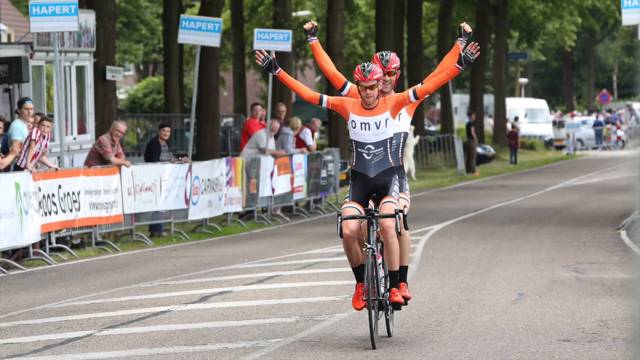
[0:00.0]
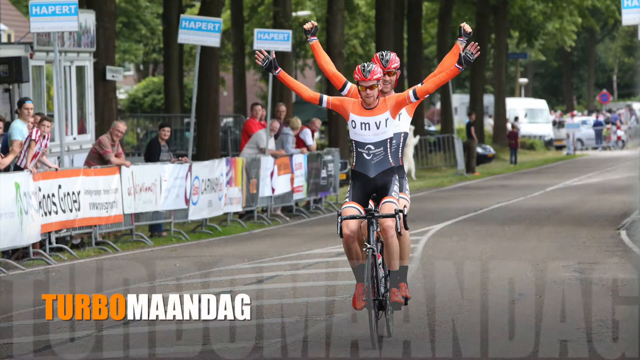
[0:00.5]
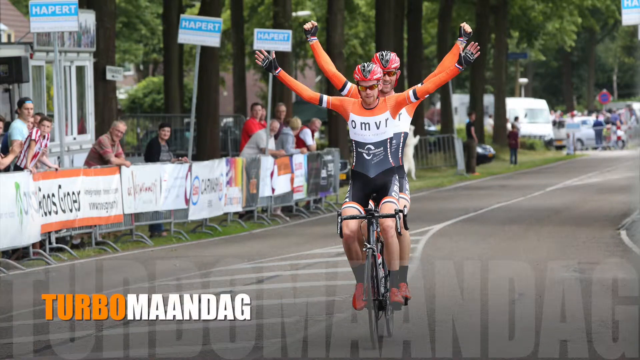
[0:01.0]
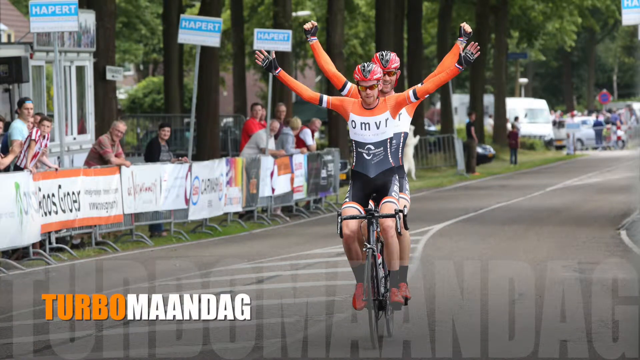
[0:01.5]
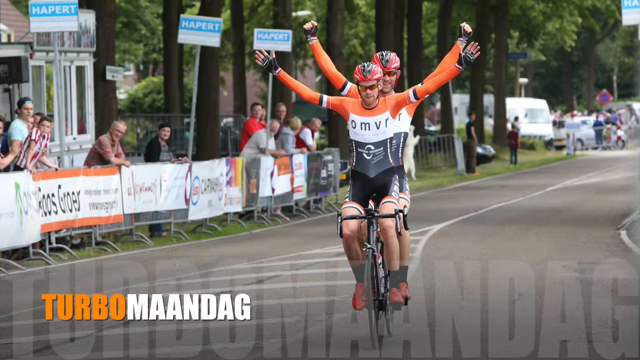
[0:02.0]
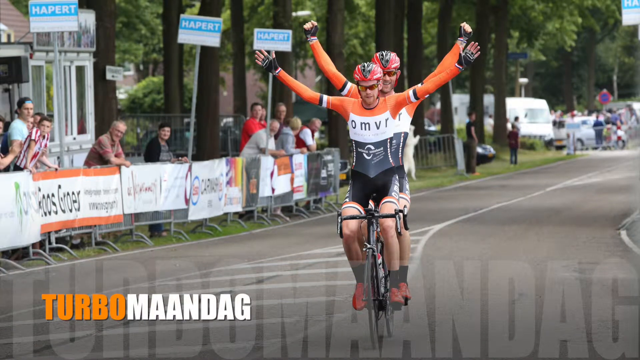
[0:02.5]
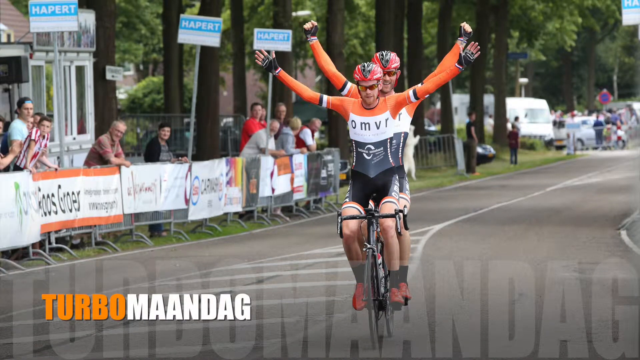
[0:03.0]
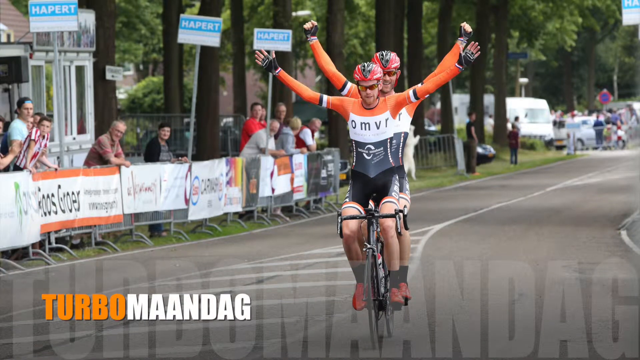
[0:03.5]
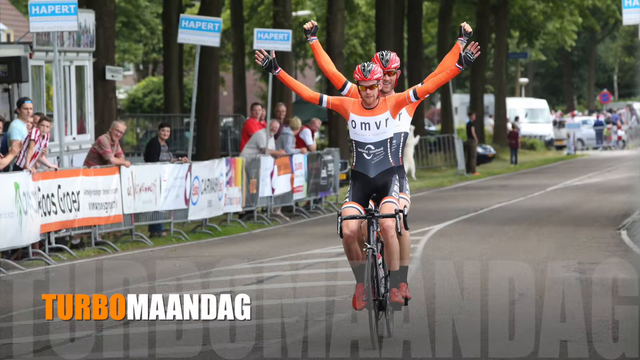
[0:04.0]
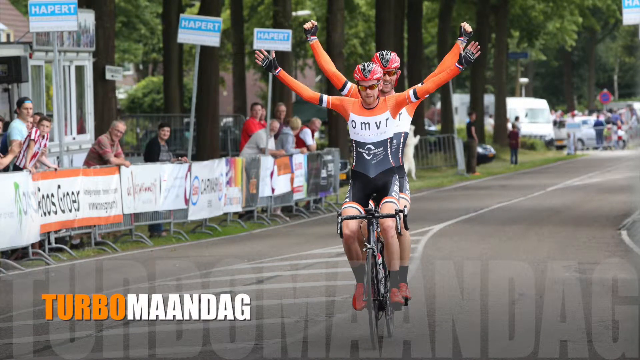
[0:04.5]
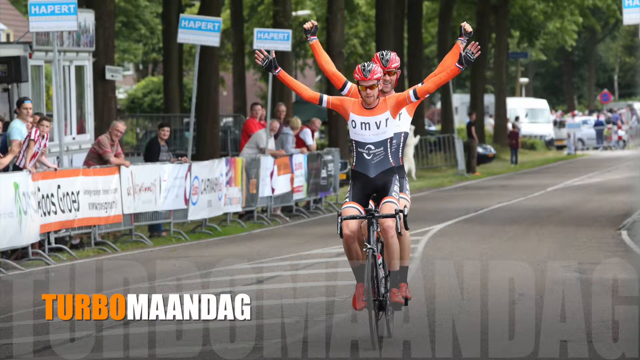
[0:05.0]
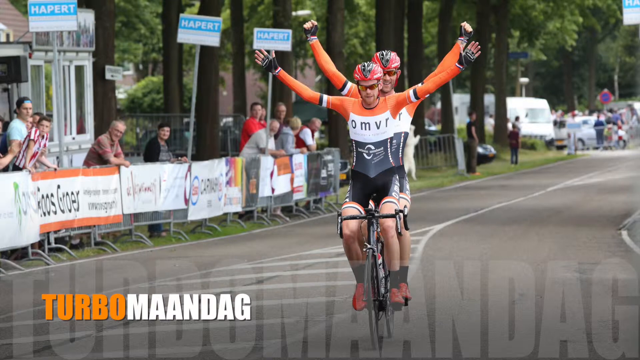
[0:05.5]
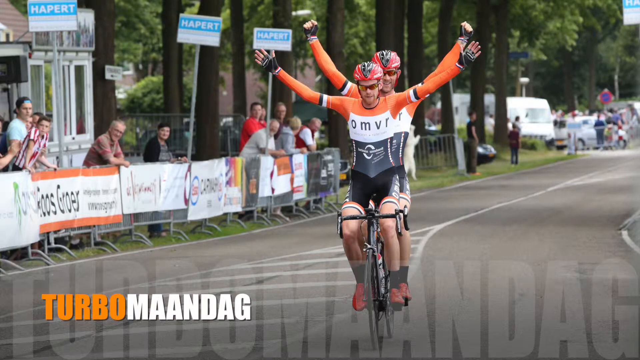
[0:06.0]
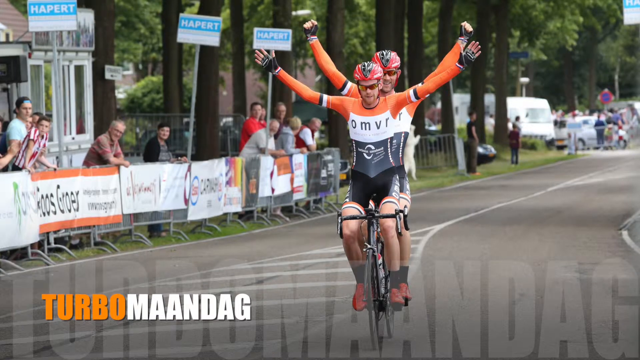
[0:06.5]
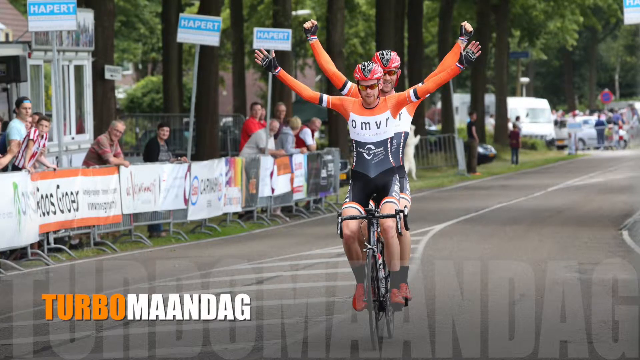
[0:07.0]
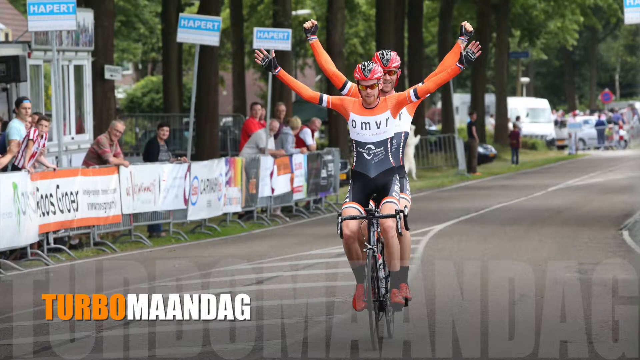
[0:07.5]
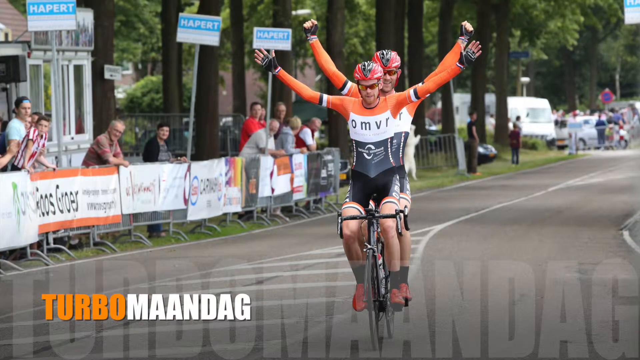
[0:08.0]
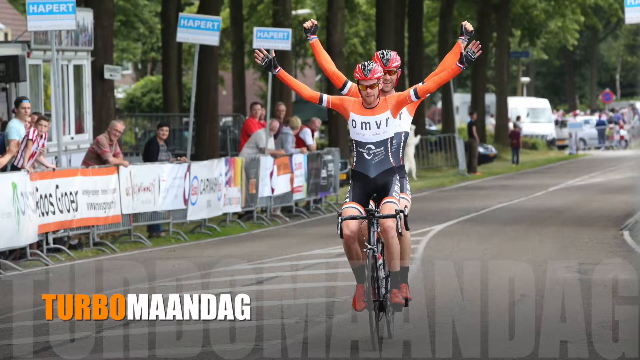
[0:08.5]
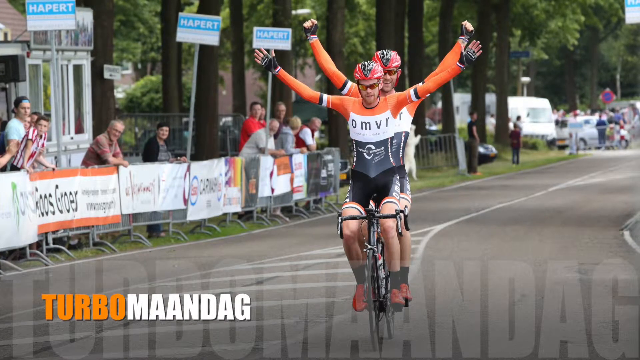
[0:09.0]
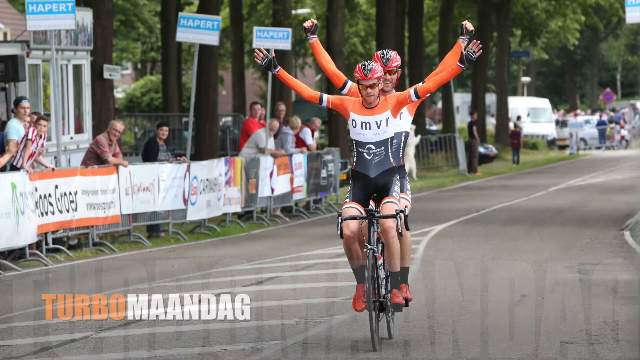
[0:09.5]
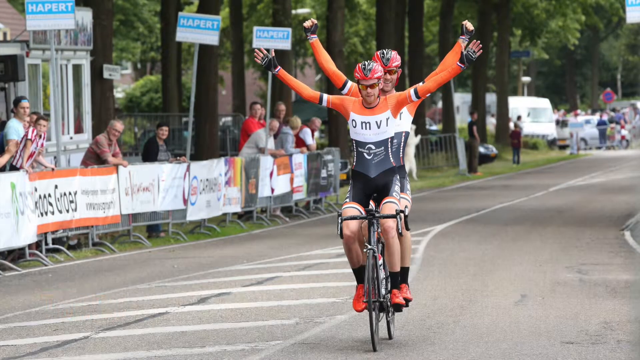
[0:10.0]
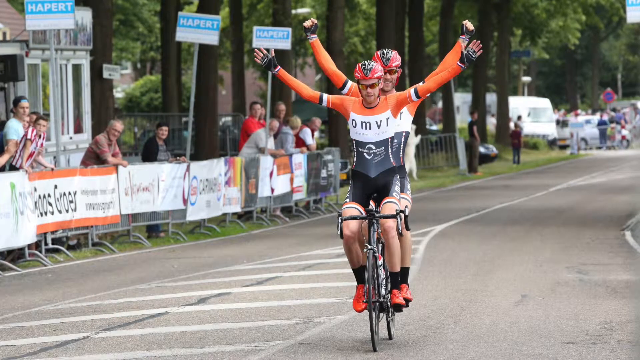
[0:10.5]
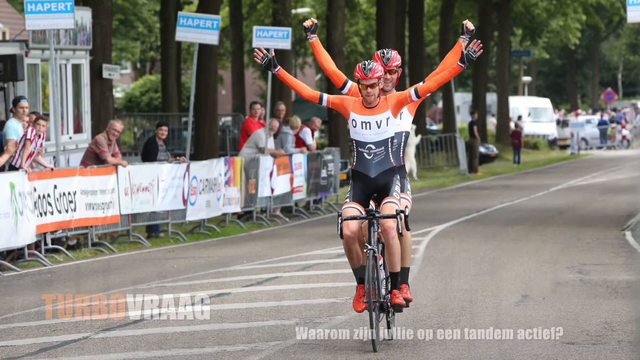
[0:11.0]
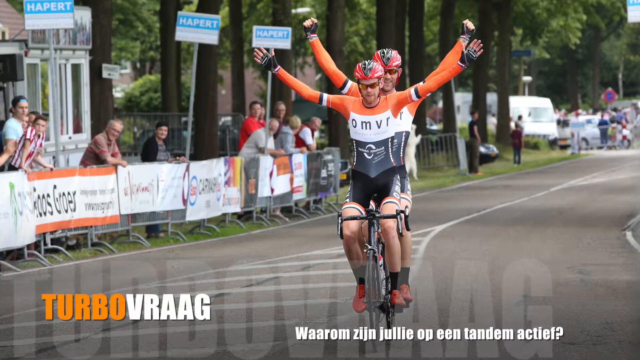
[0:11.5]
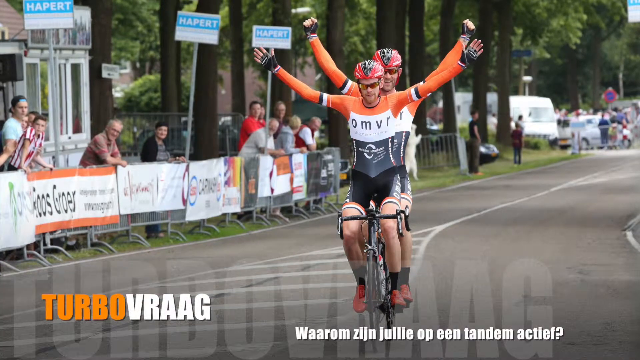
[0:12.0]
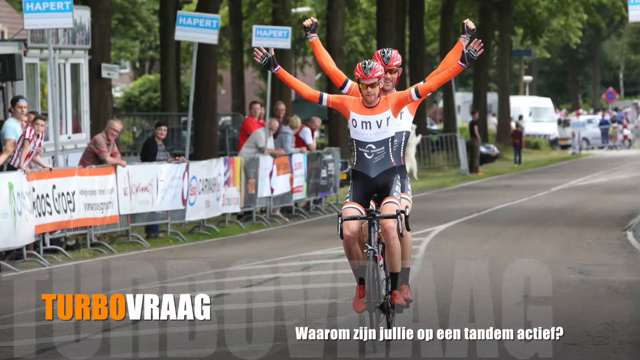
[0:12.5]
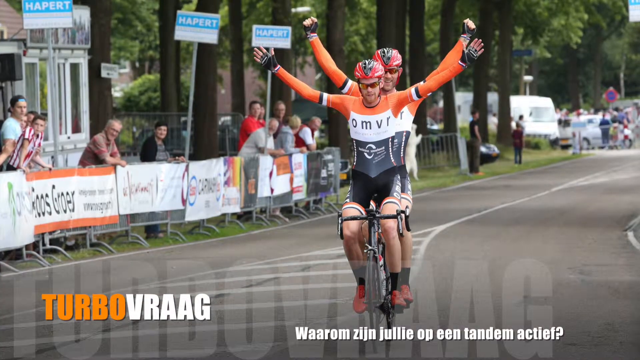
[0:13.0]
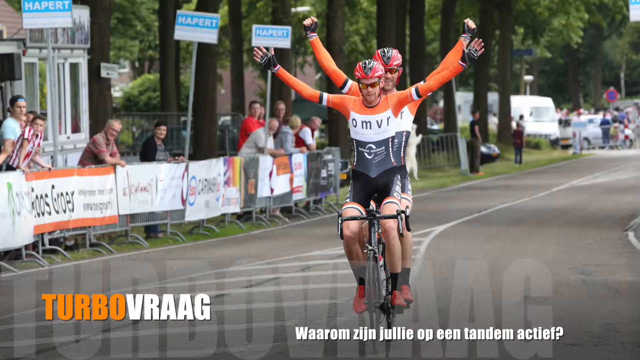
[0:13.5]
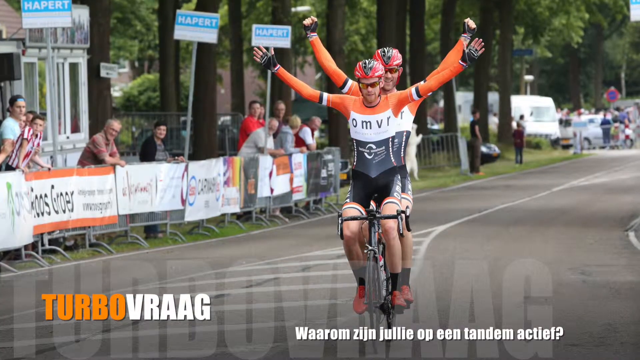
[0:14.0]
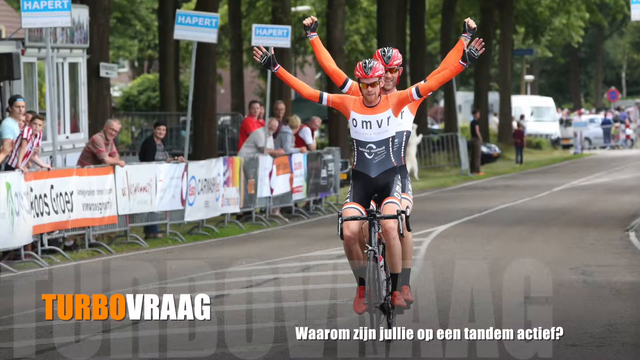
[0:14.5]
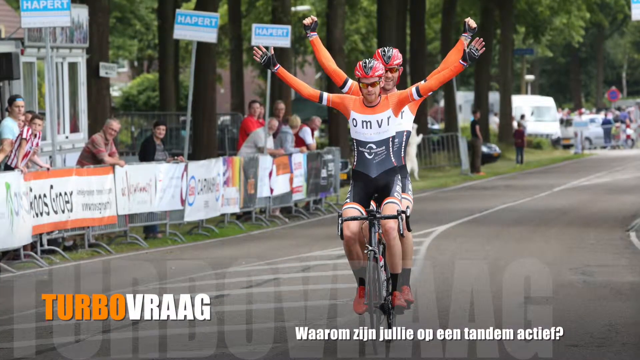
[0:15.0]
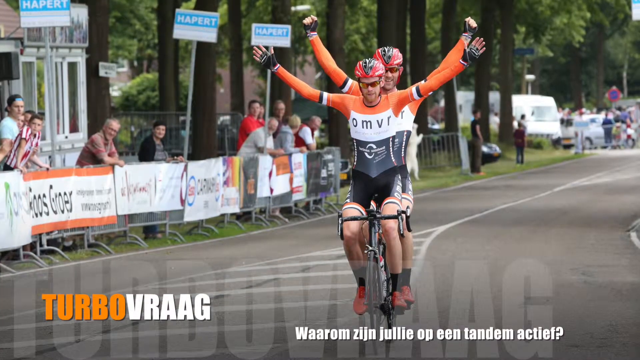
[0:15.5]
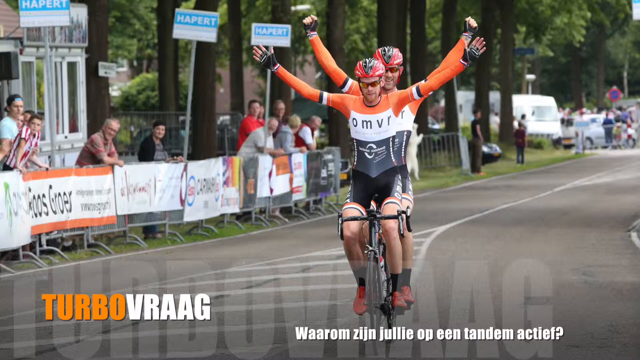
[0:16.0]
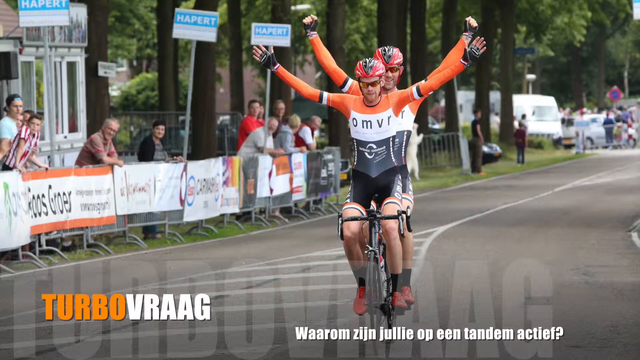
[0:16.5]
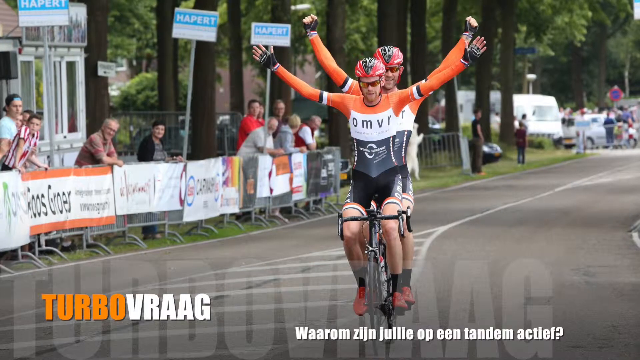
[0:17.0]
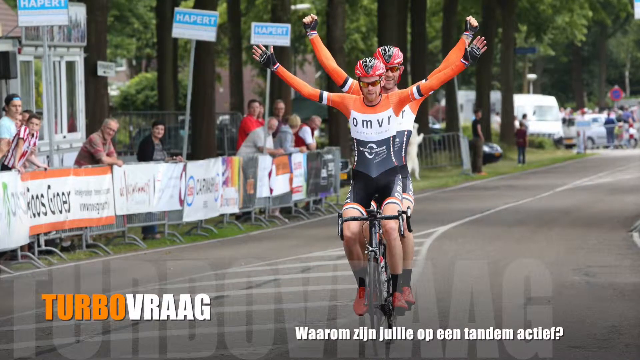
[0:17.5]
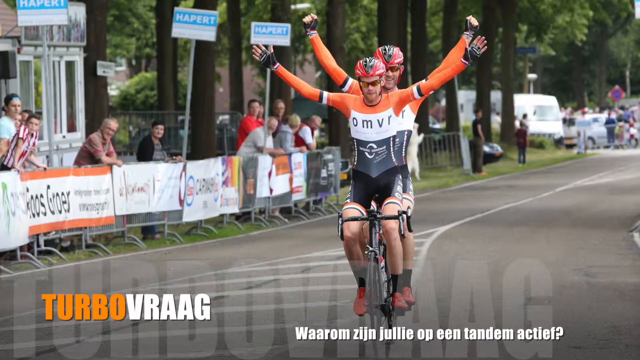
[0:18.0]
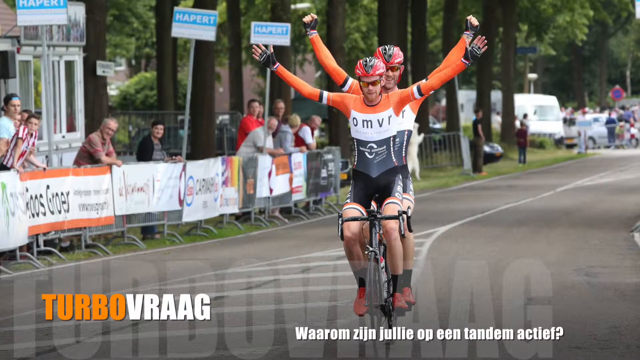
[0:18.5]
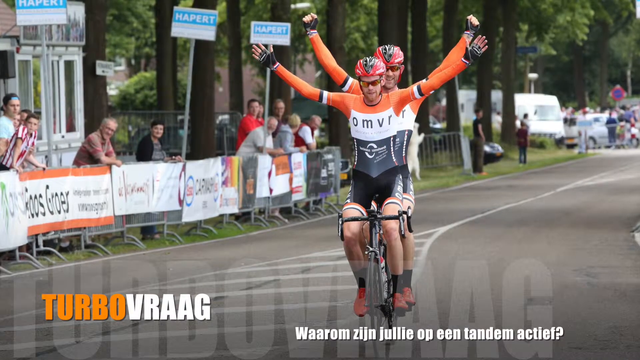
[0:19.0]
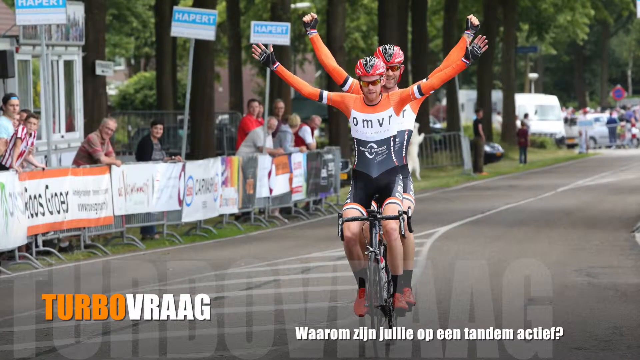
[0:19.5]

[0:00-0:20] Two cyclists are very close to one another, both with their hands raised up in front of them. Both wear red and black cycling helmets. Their uniform tops are orange at the top, white in the middle and black at the bottom, with tight black shorts, white and black socks, and red shoes. In the bottom left, the letters "TURBO" appear in orange, followed by "MAANDAG". To the left of the two cyclists, people are lined up watching them win their race. A closed caption at the bottom is written in an unidentified language.